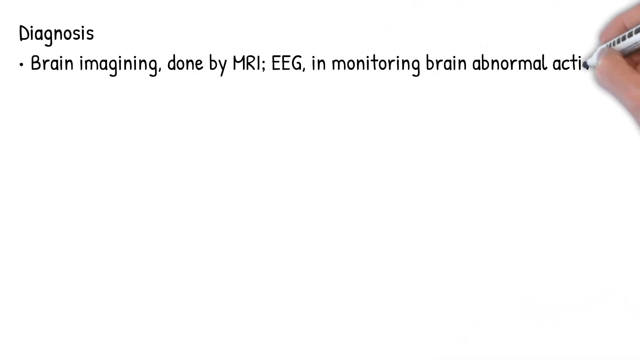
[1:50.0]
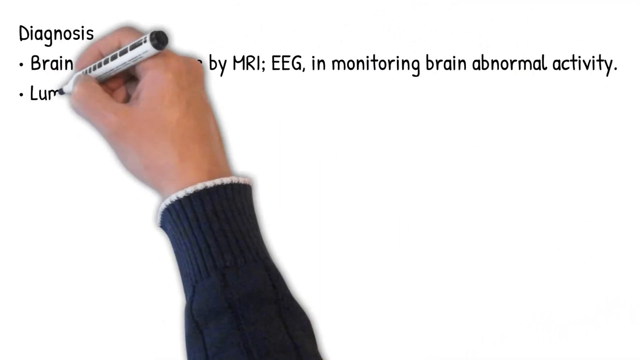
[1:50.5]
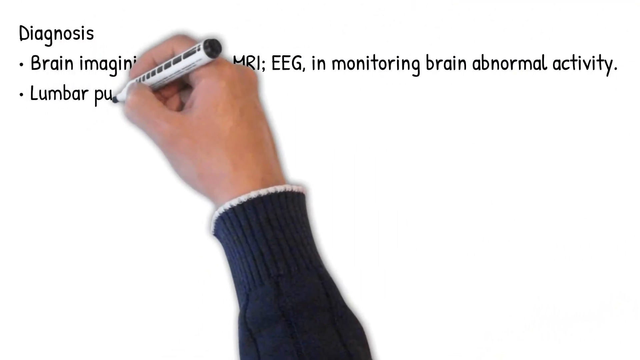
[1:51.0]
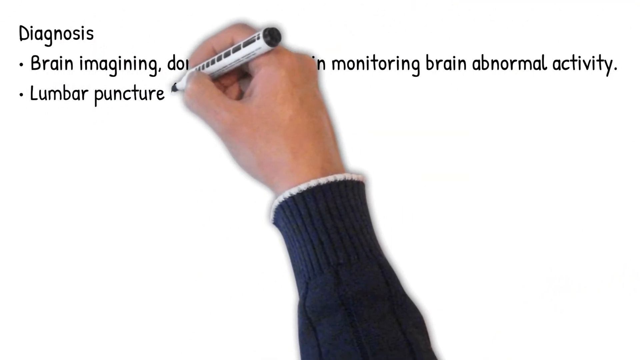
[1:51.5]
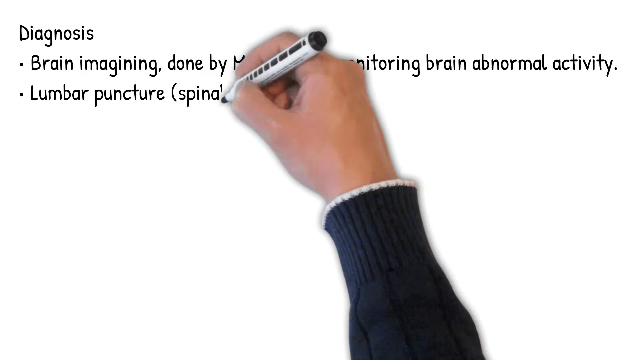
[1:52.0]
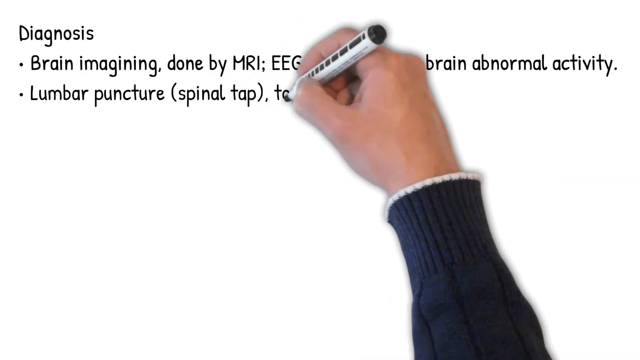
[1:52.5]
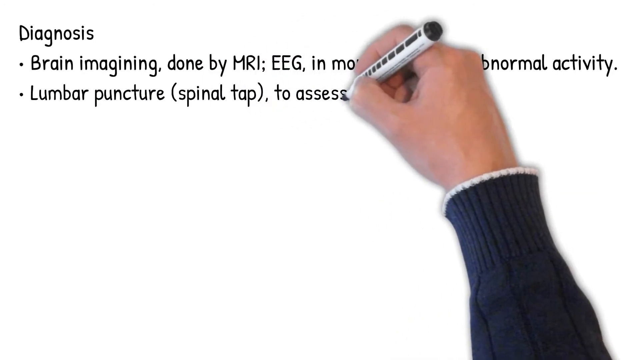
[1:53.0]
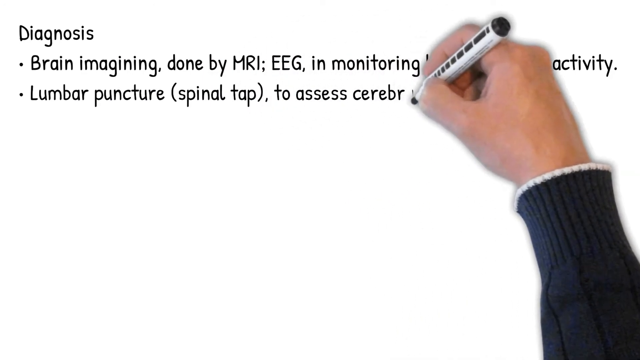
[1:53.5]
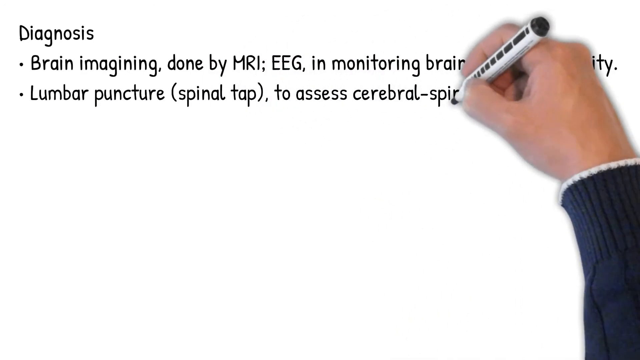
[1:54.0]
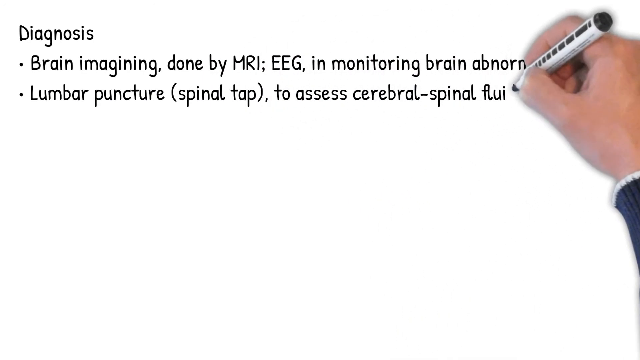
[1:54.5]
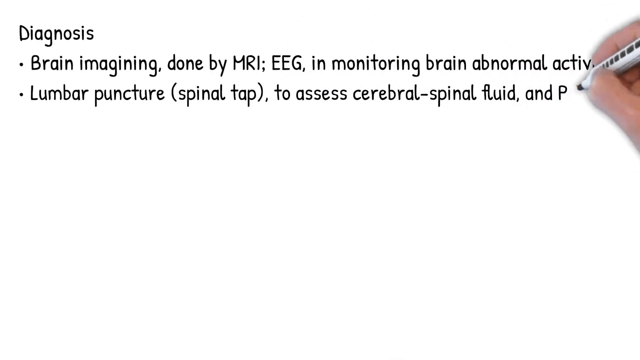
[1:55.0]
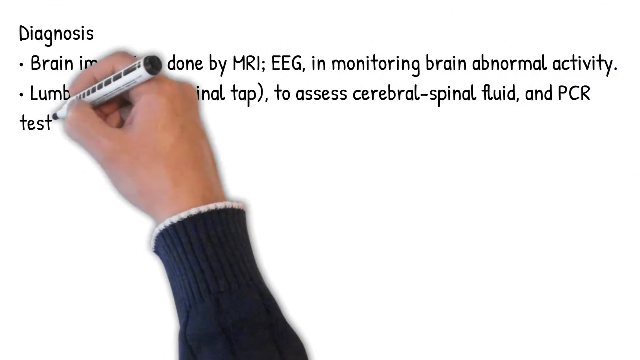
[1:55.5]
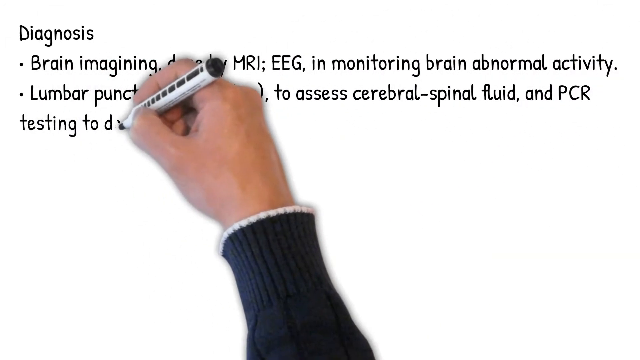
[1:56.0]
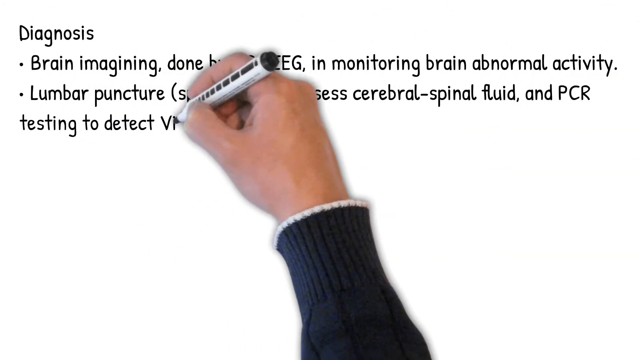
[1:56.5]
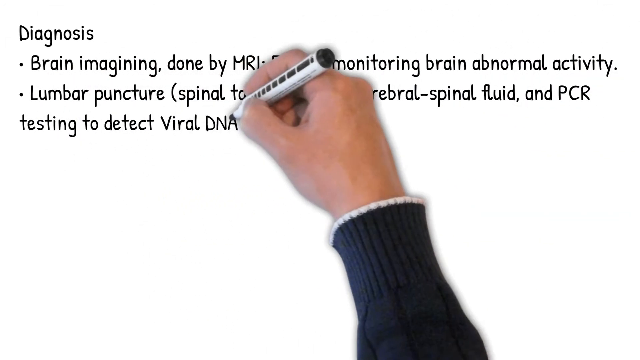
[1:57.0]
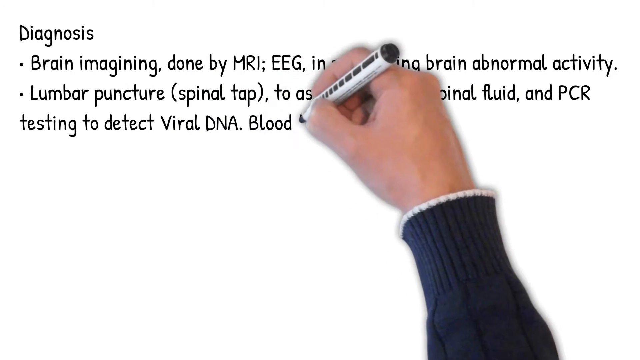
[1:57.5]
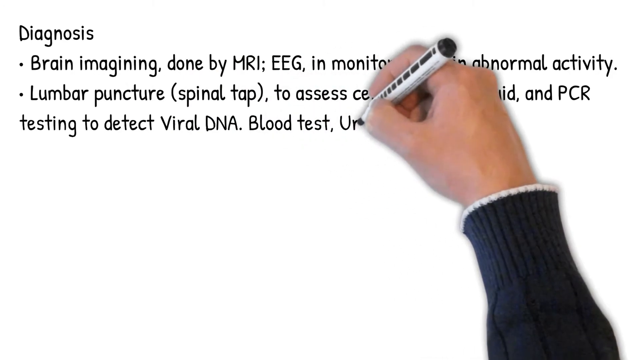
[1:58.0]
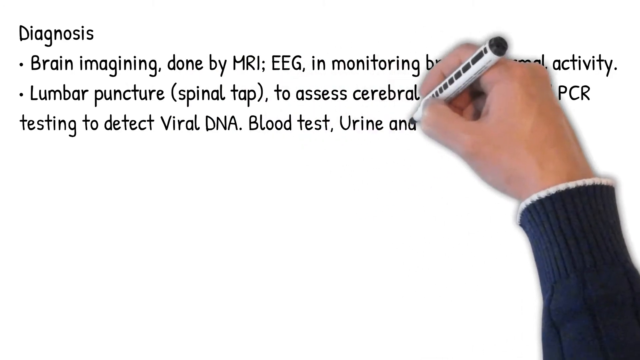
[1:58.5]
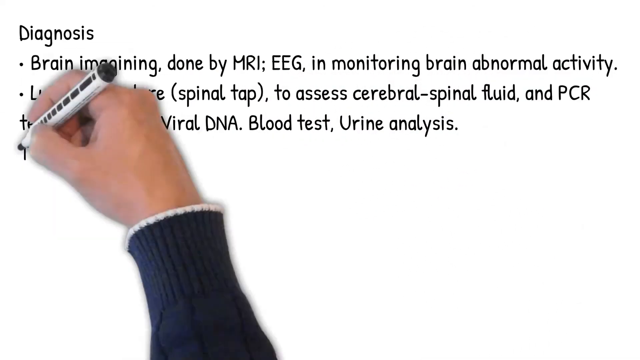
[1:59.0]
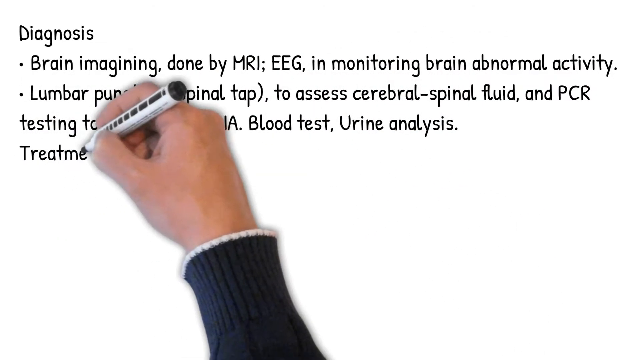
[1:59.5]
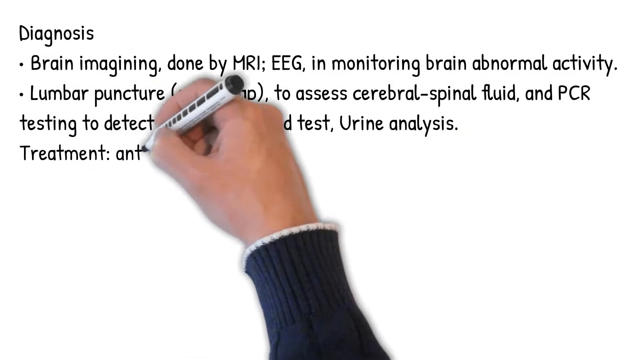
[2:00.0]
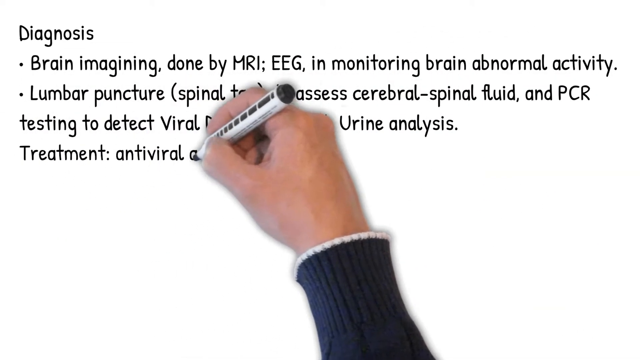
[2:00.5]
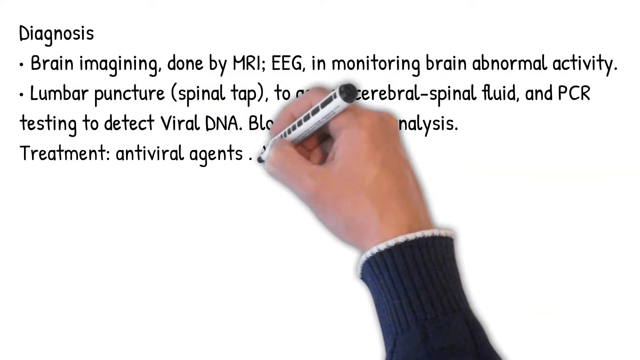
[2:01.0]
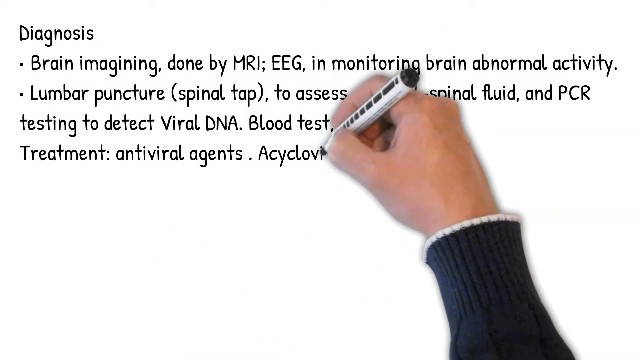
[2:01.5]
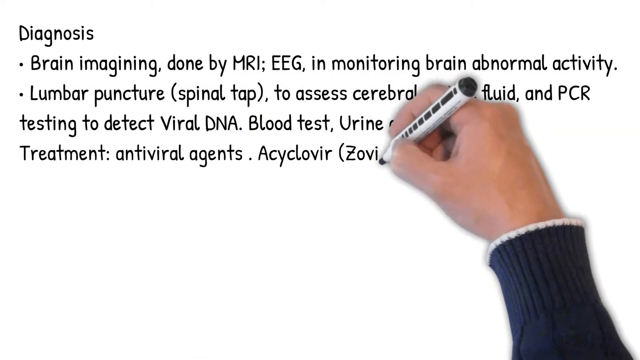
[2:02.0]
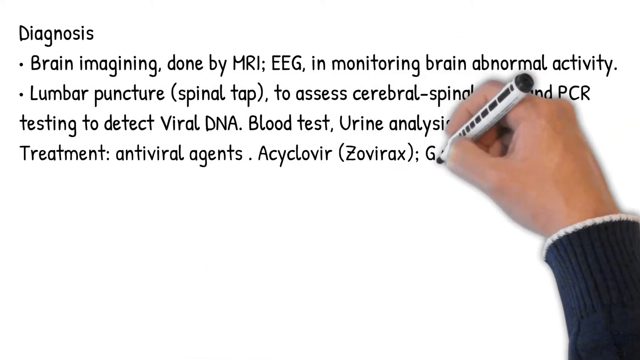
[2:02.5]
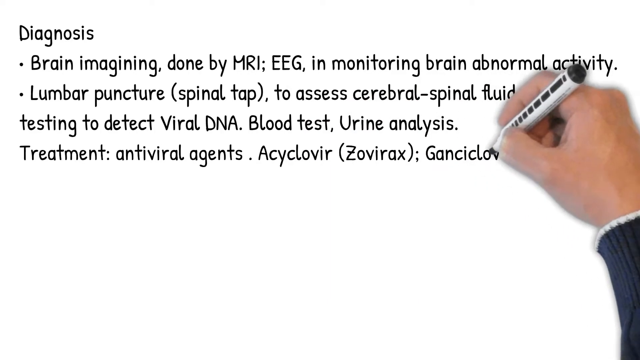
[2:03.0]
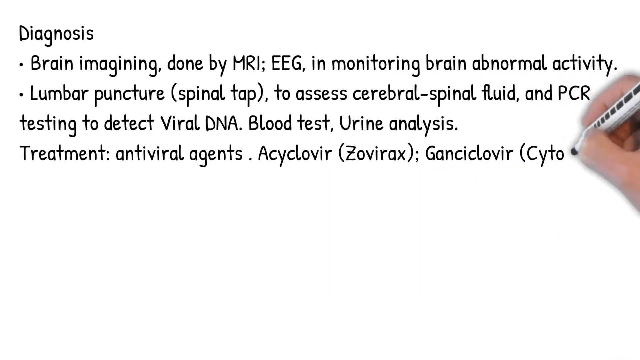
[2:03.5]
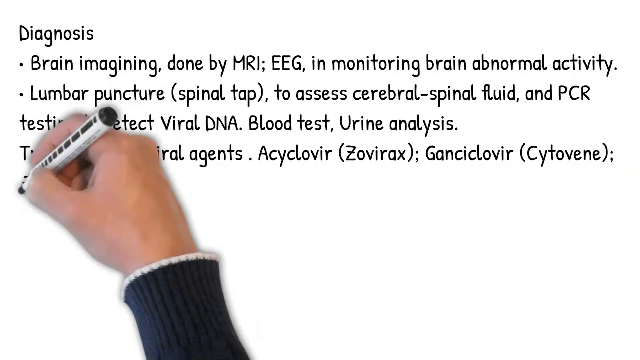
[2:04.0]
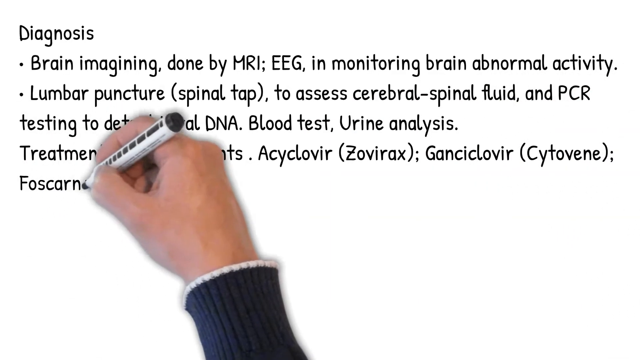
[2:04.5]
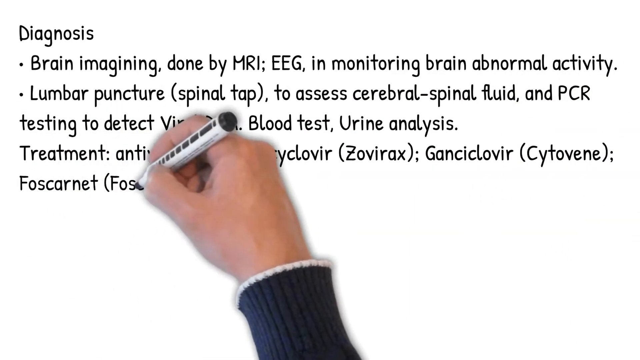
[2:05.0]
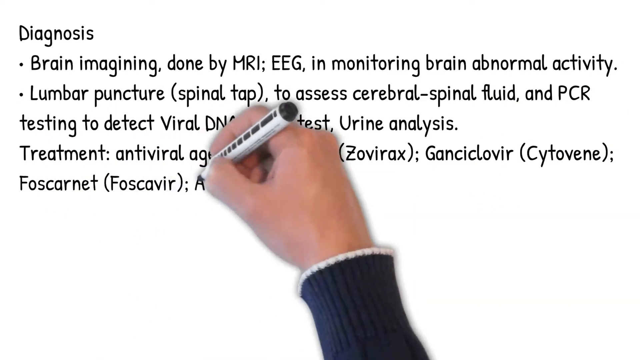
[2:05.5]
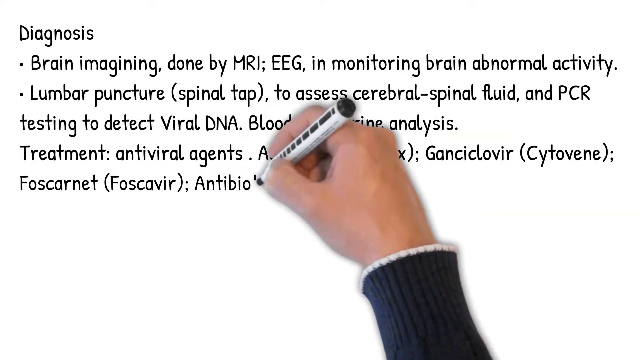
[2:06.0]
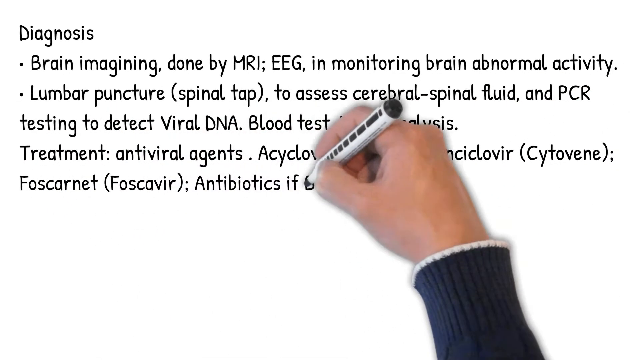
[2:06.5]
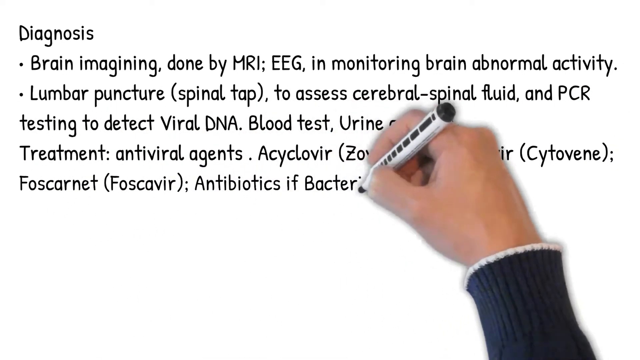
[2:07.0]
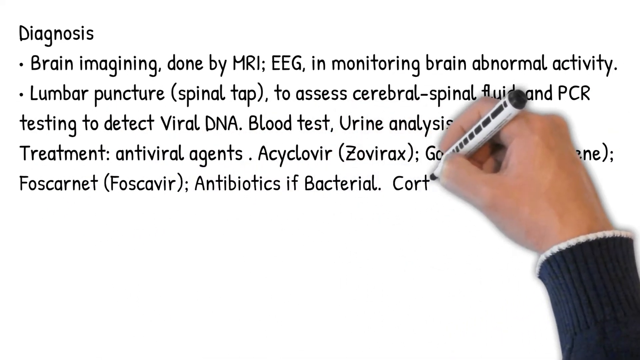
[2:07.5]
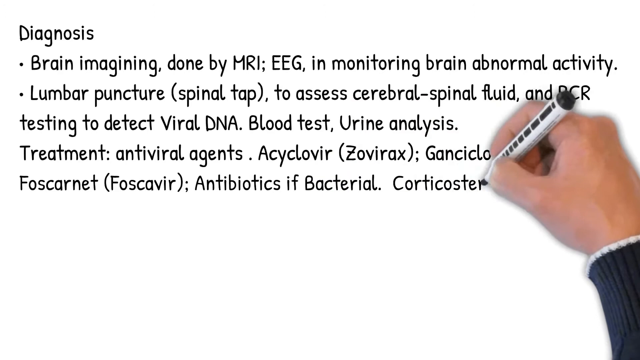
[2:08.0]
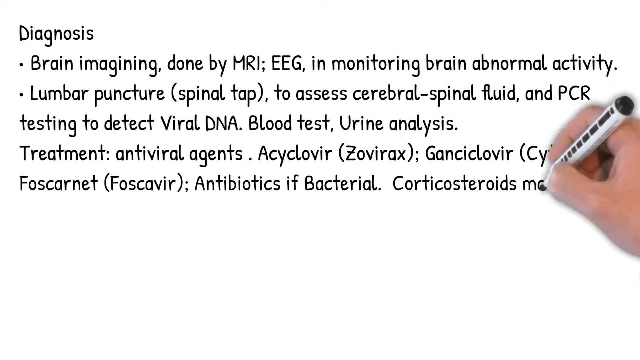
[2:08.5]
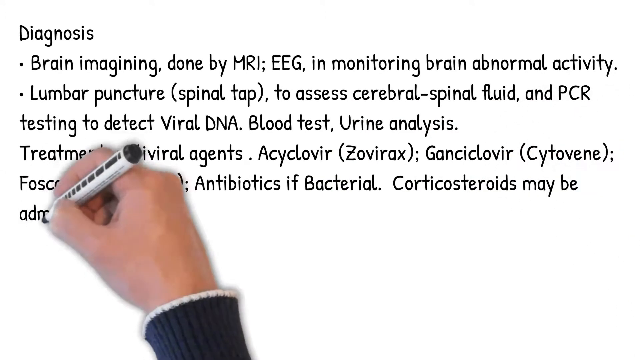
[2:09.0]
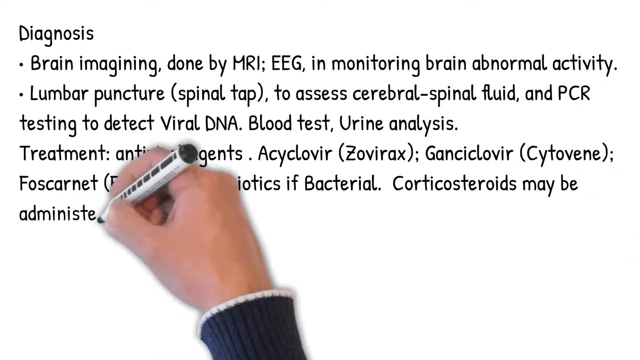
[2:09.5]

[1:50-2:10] The diagnosis page continues: imaging of the brain with MRI, and an EEG to monitor brain activity. Further methods listed are a spinal tap, also known as a lumbar puncture, to assess the spinal fluid, PCR testing to detect viral DNA, blood tests and urine analysis. The page then moves on to treatment: antiviral agents, with several named, and antibiotics for a bacterial infection. The text says "corticosteroids may also be administered to the patient".